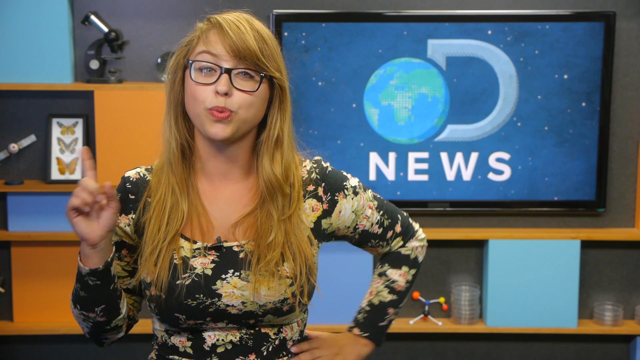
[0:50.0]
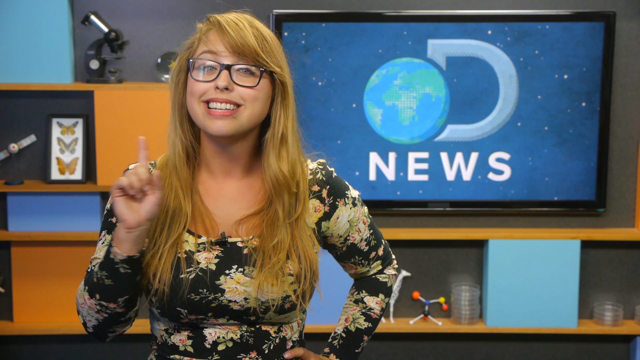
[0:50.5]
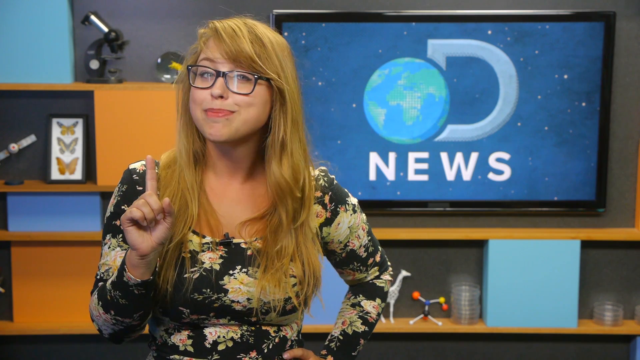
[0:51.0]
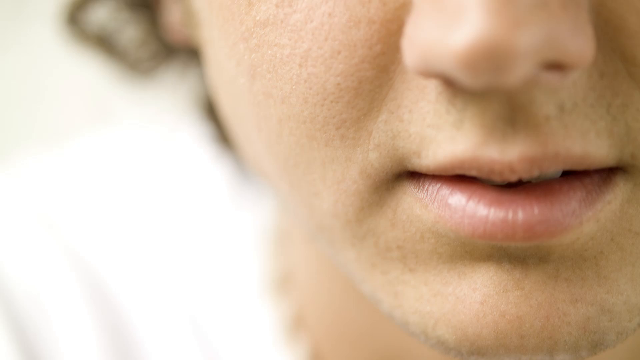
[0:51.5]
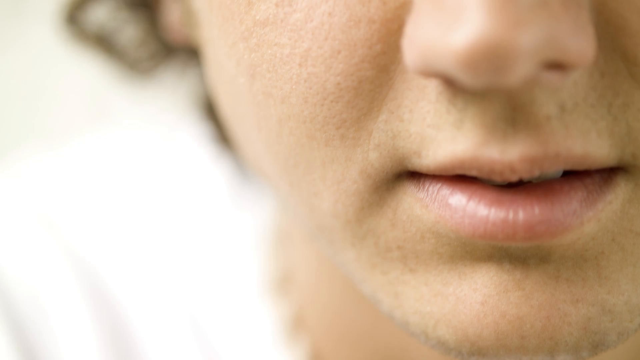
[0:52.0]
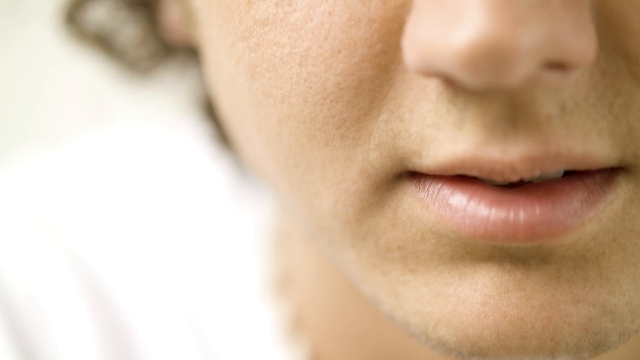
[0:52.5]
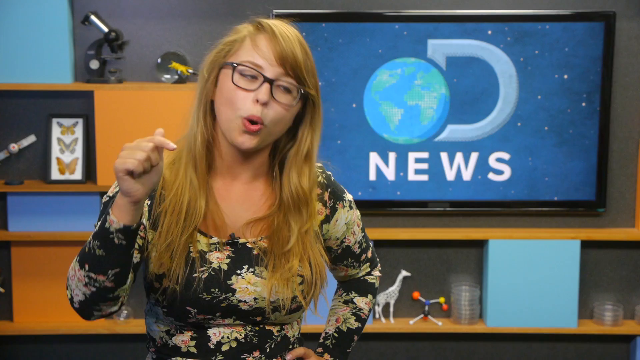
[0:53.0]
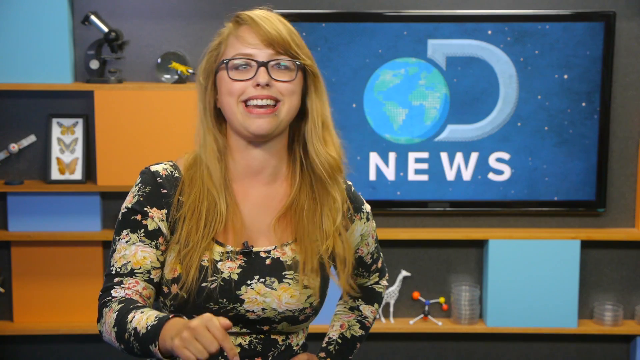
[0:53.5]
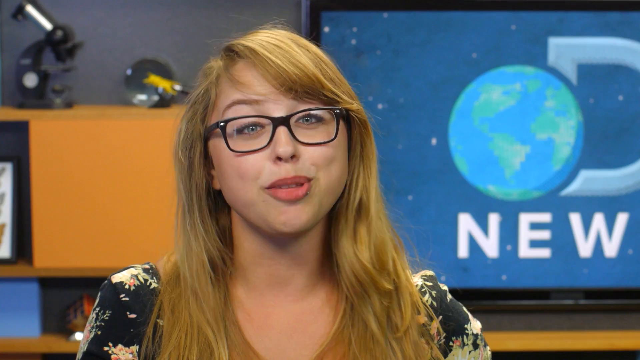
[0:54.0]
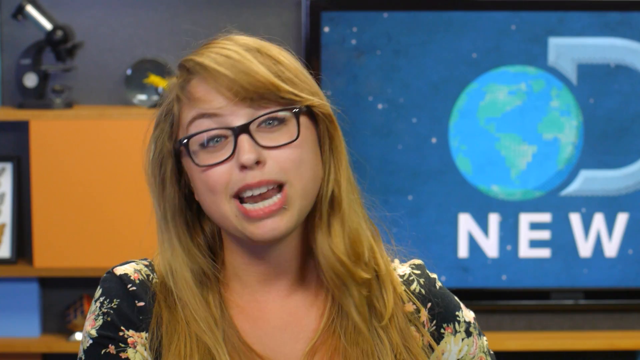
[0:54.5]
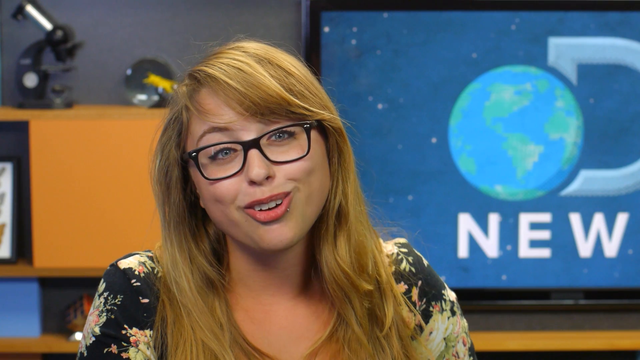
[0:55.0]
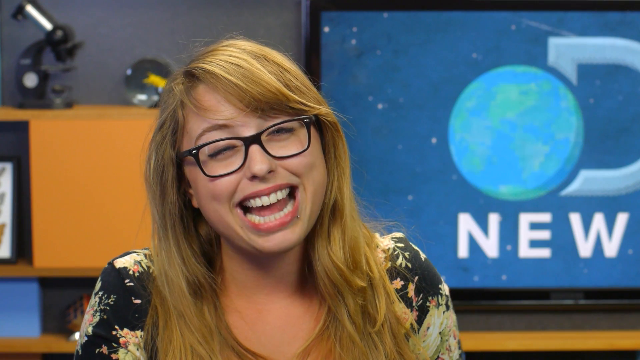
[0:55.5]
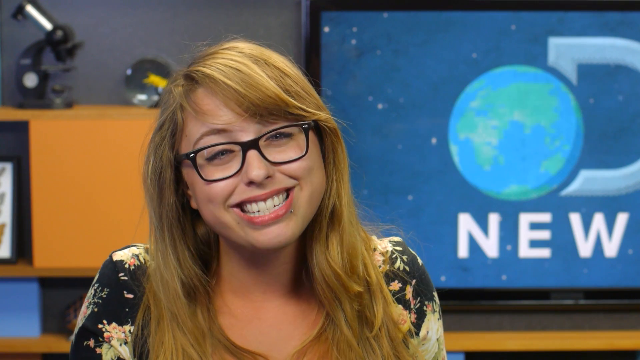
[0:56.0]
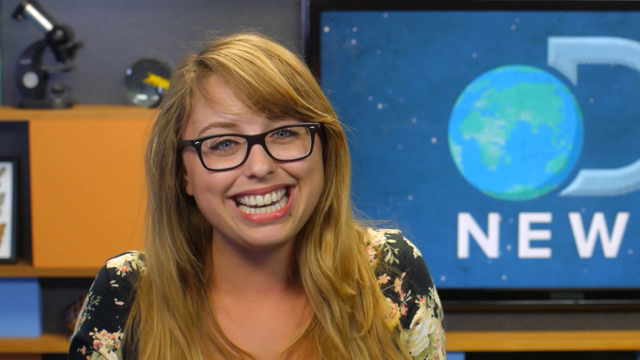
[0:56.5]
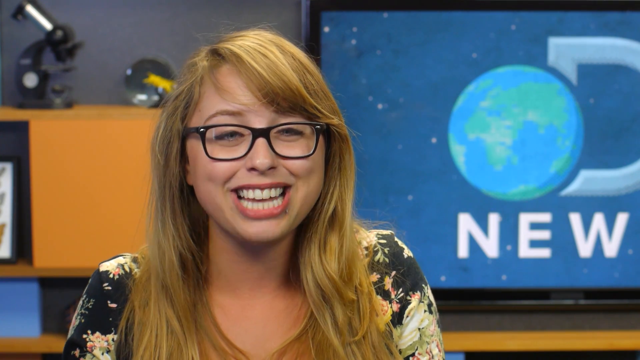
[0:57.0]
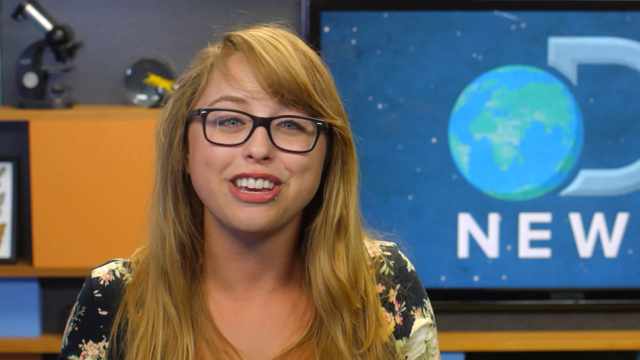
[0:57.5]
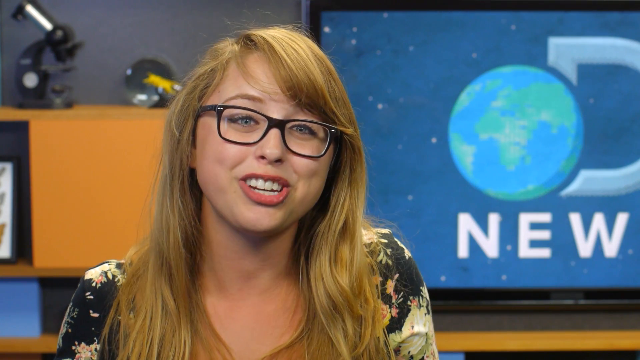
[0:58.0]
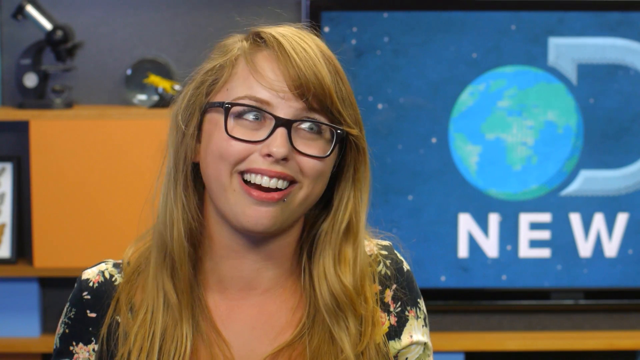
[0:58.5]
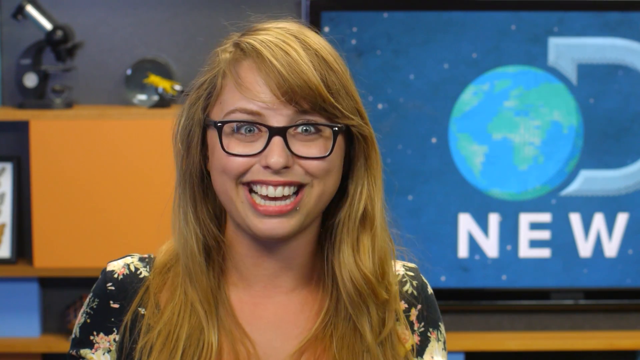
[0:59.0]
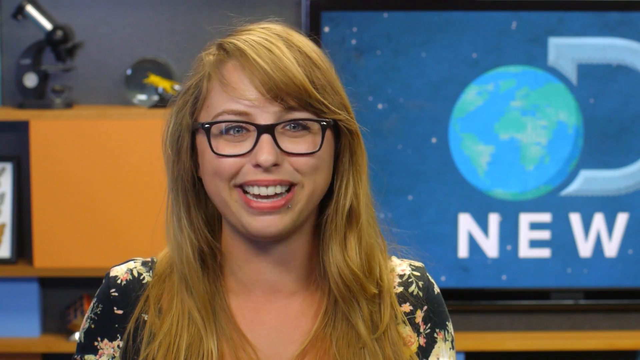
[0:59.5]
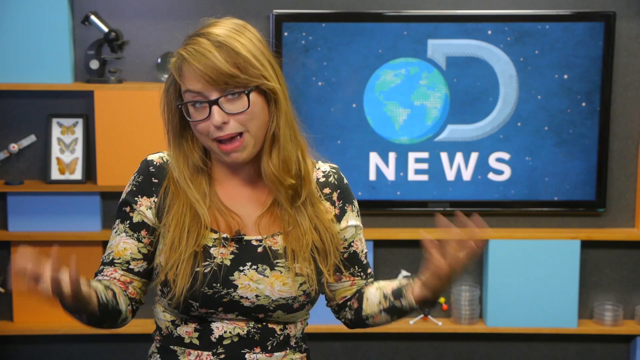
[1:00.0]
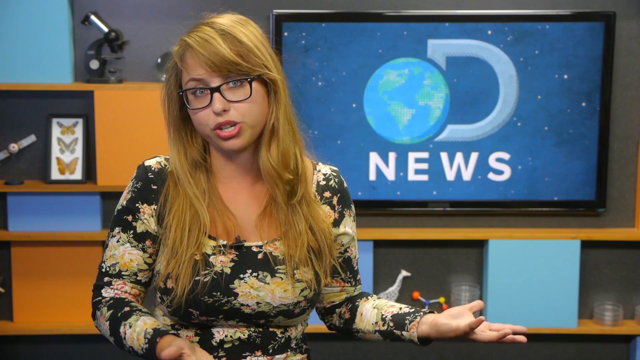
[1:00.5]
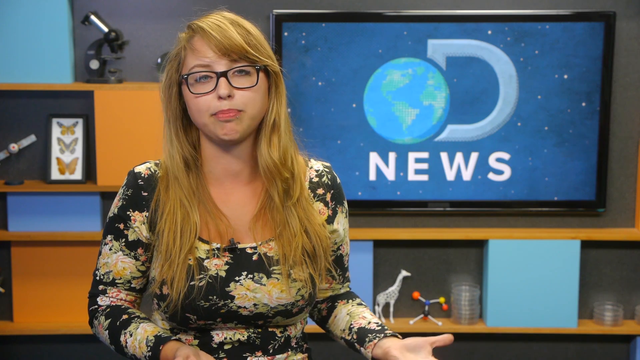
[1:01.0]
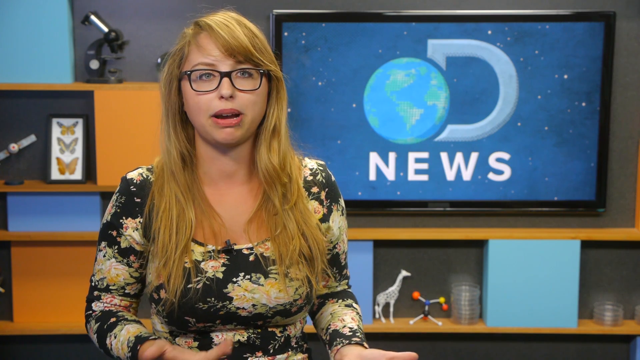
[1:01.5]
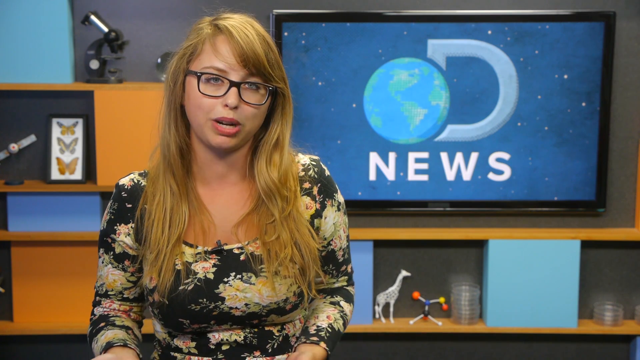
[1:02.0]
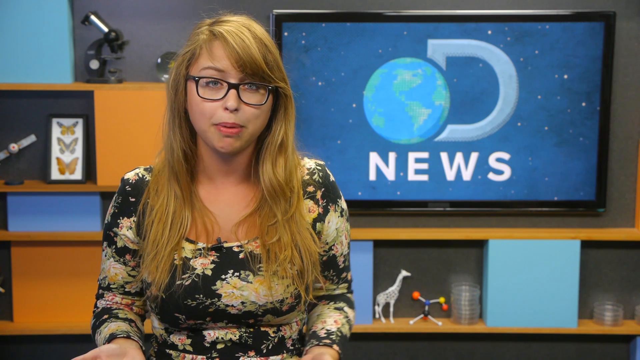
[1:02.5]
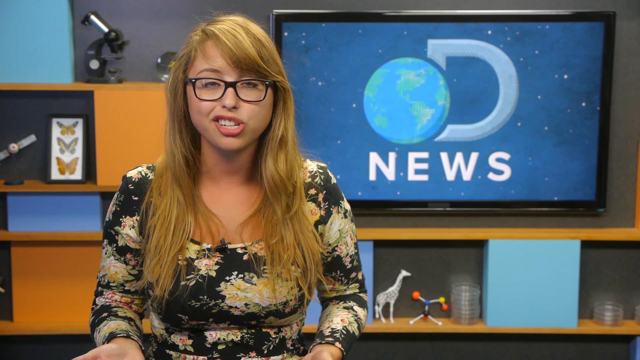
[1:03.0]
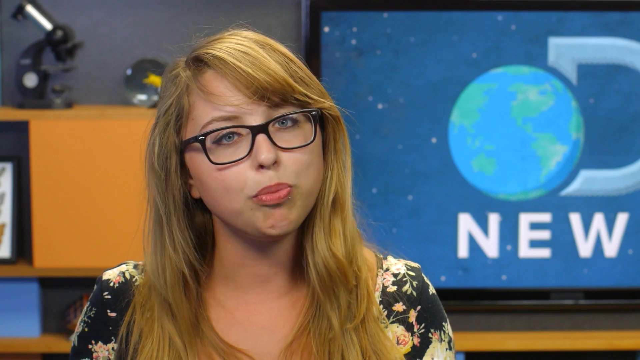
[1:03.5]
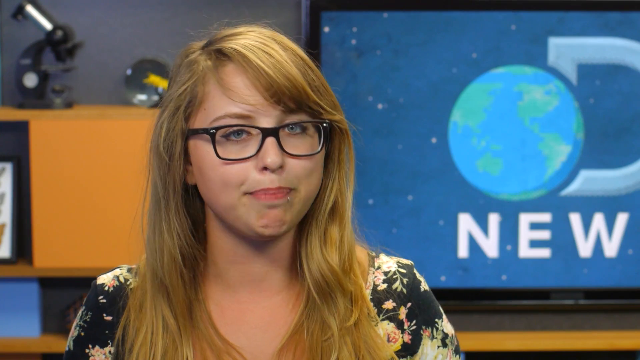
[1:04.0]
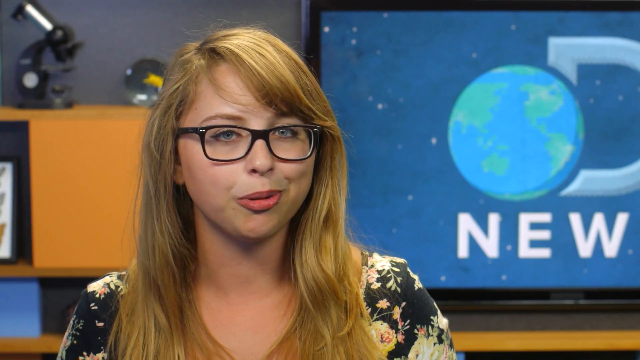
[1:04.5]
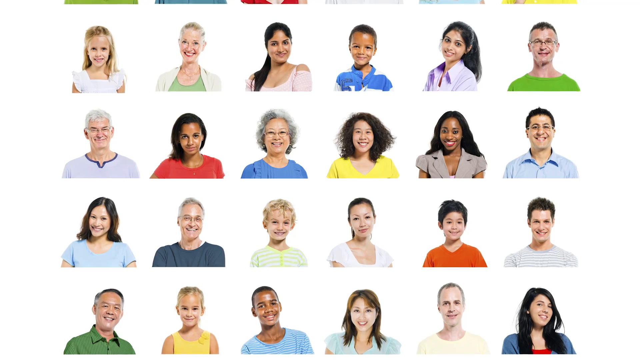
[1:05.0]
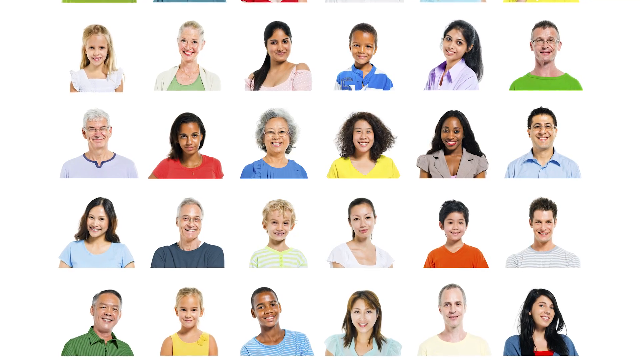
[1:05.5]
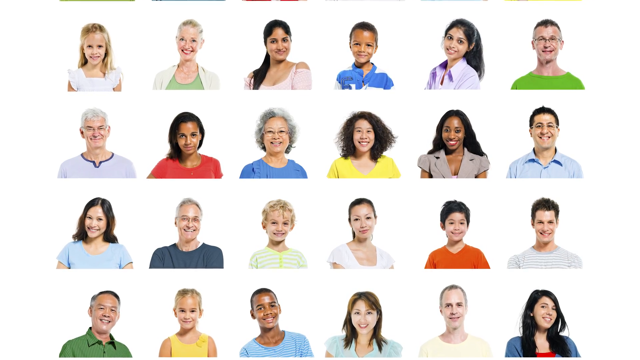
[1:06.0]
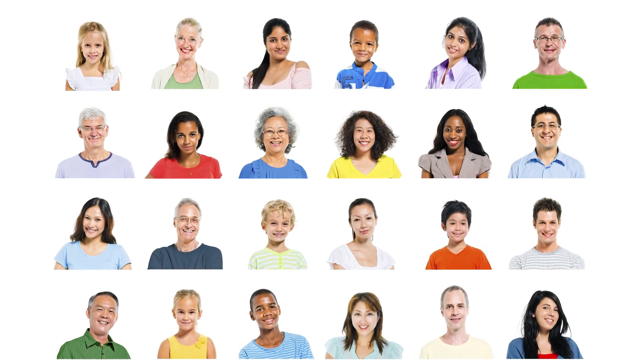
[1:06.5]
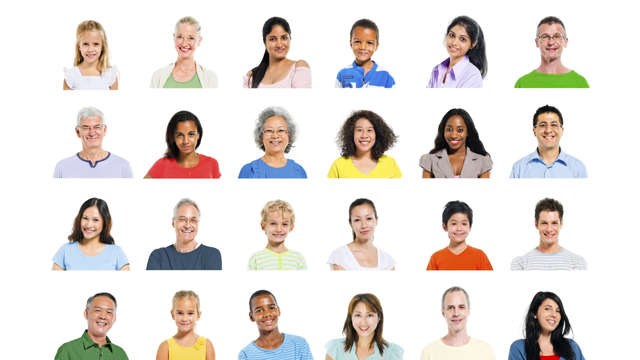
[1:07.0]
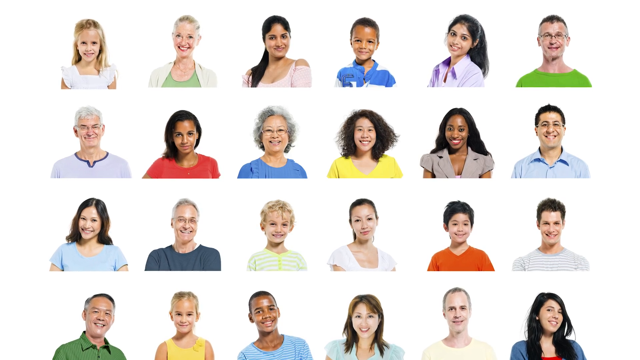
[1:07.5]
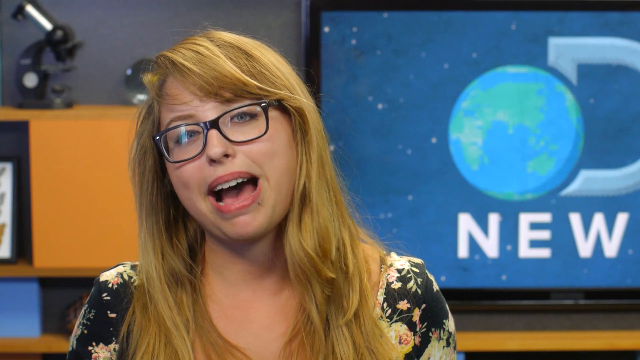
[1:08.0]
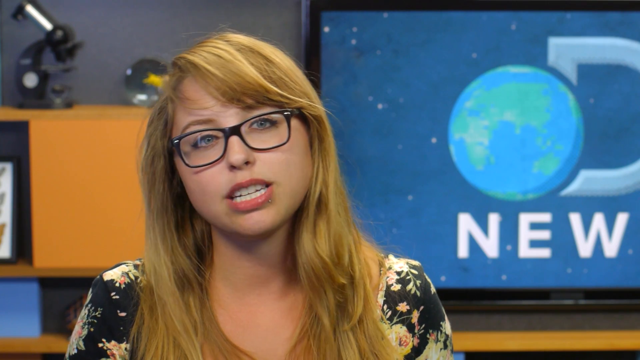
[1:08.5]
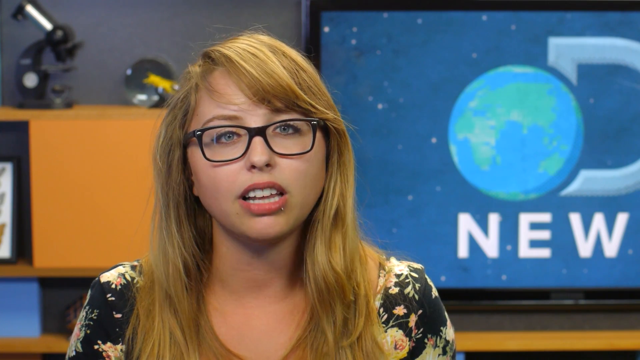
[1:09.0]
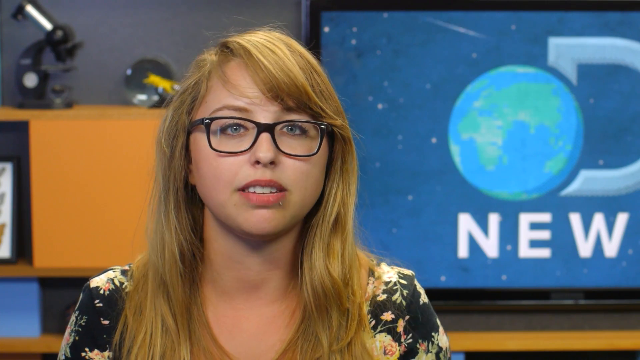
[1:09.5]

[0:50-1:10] Laci, the newscaster, uses animated, matter-of-fact and isn't-this-interesting gestures as she speaks. Then there is a close-up of a person's face, almost all the way up but definitely the right cheek, showing the mouth and nose; the person appears to be of European descent. Next comes a screen of photographs of 24 people arranged six across and four down, shown from the torso up: women, men and children with gray hair and dark hair, of different ethnicities, skin tones, hair colors and ages, ranging from children to mature adults. The video returns to Laci in the studio, whose gestures are fun and carefree, with body and eye movements. The close-up of the face of the person of European descent appears, then Laci, and then the grid of photographs.